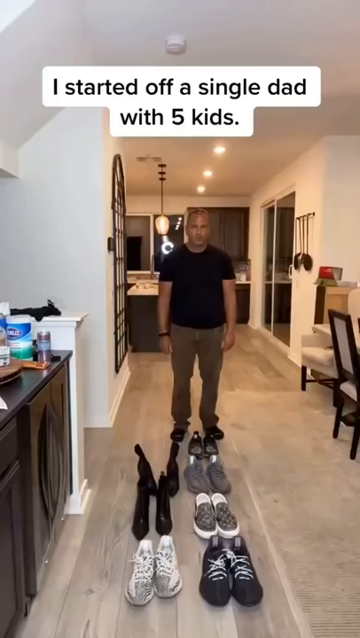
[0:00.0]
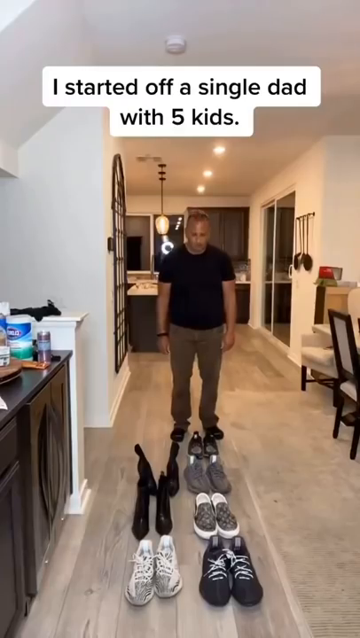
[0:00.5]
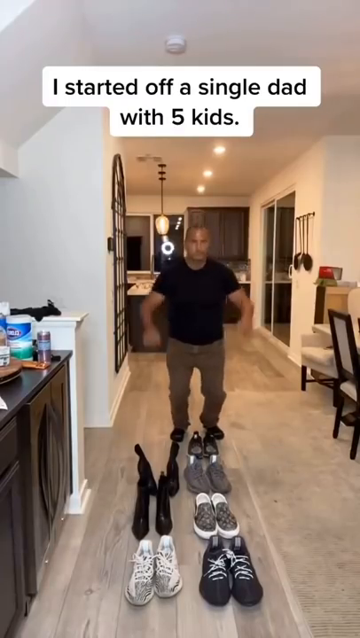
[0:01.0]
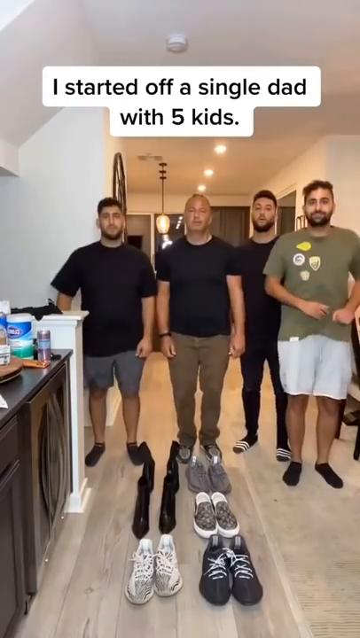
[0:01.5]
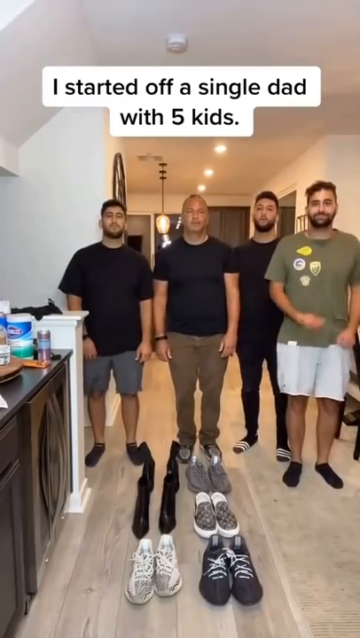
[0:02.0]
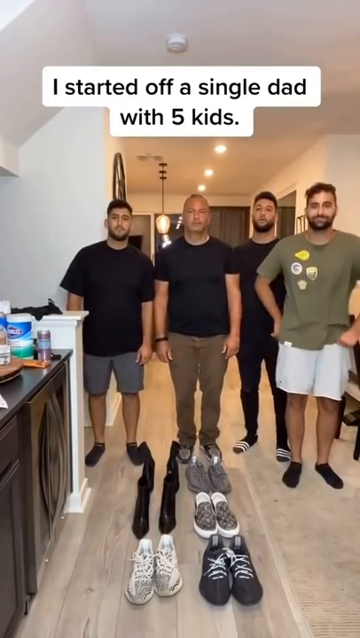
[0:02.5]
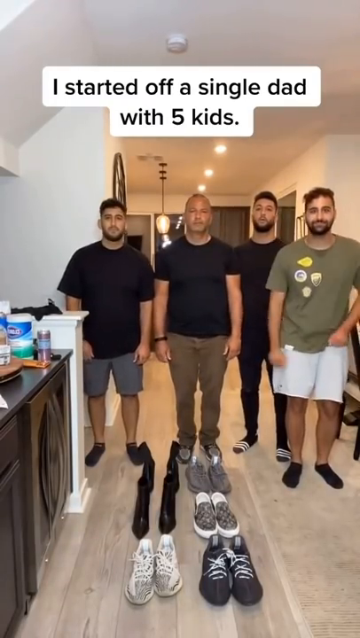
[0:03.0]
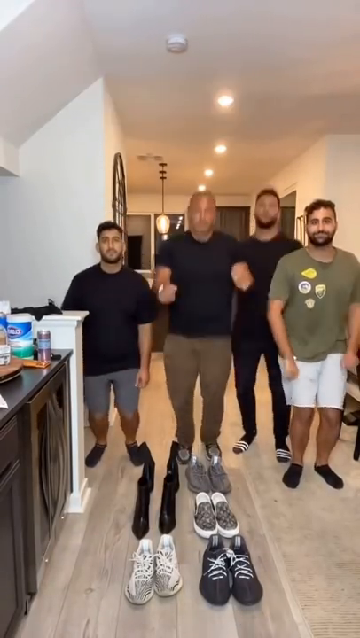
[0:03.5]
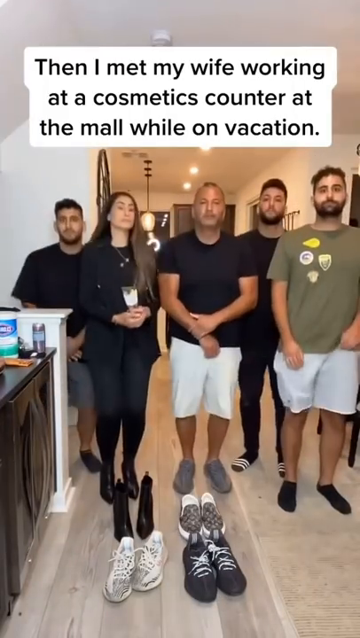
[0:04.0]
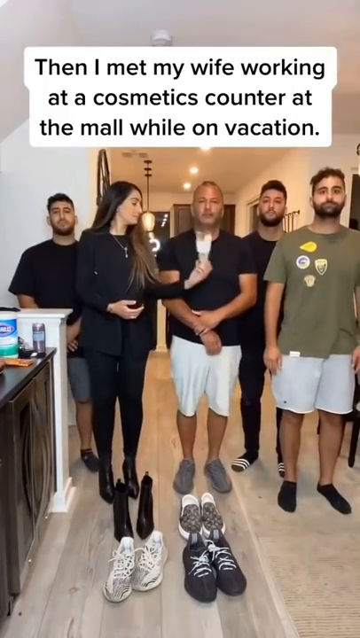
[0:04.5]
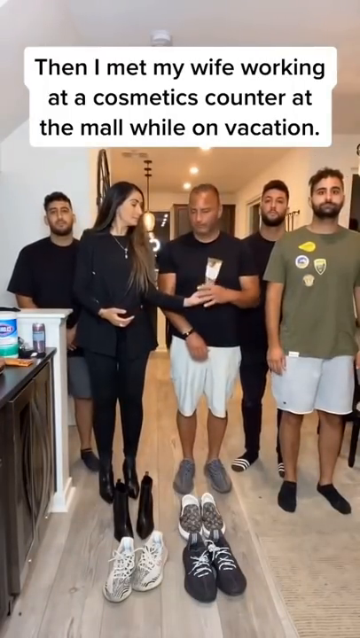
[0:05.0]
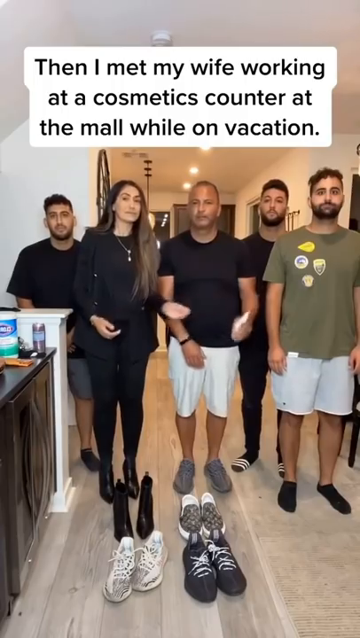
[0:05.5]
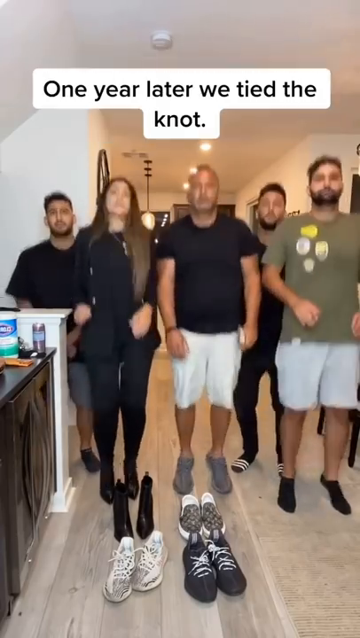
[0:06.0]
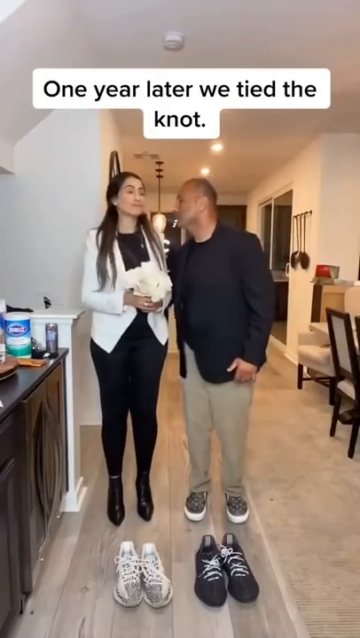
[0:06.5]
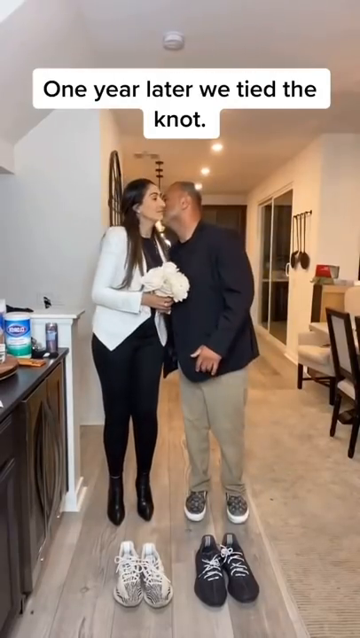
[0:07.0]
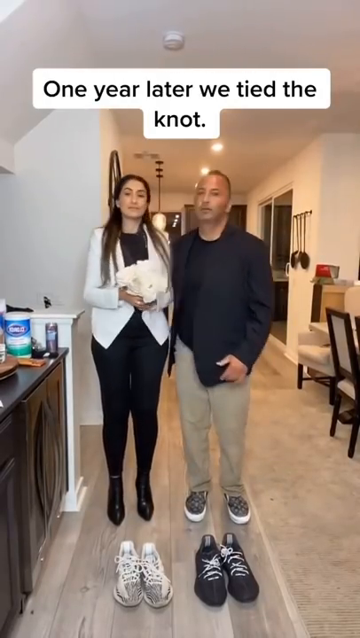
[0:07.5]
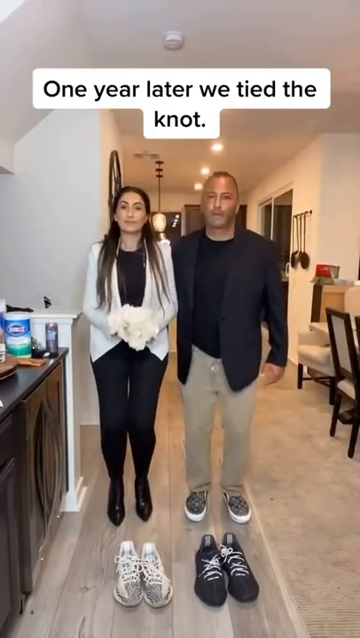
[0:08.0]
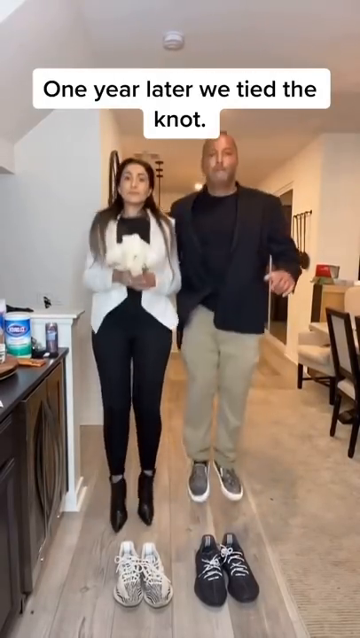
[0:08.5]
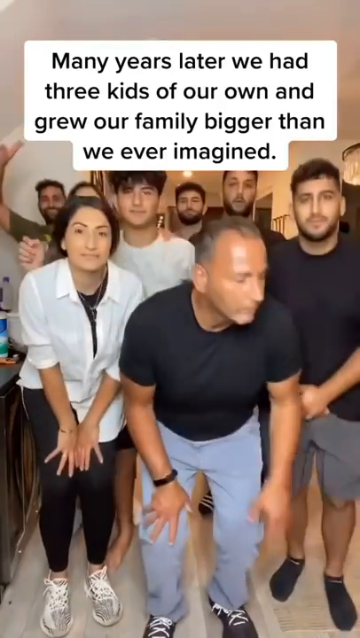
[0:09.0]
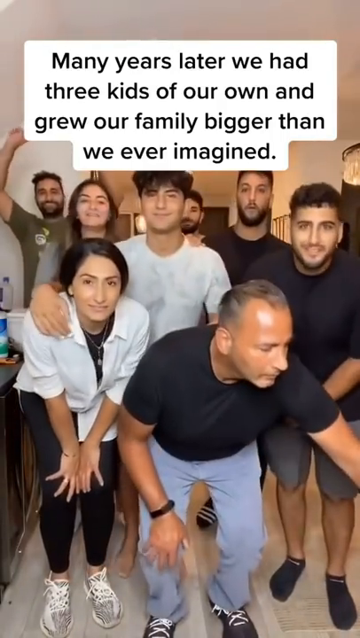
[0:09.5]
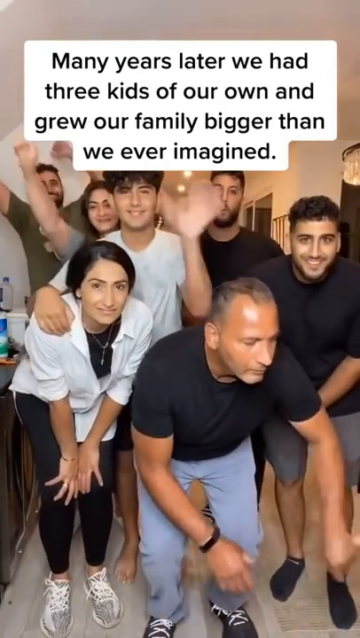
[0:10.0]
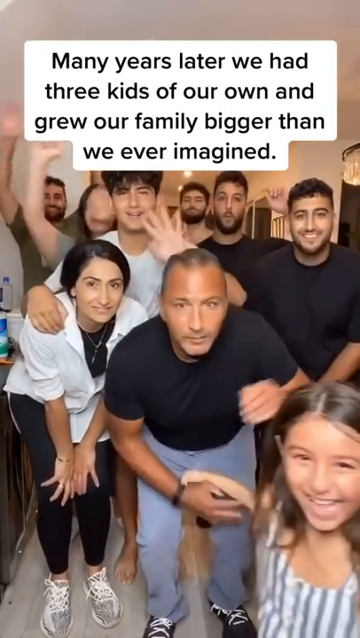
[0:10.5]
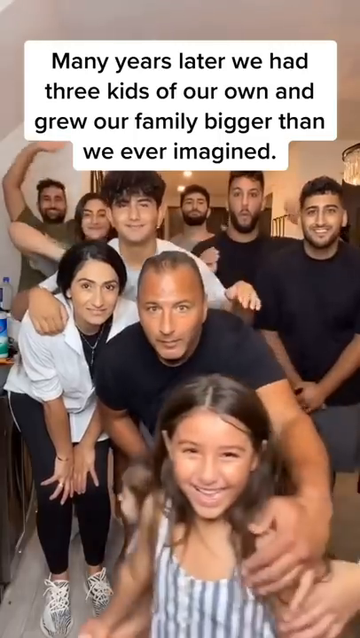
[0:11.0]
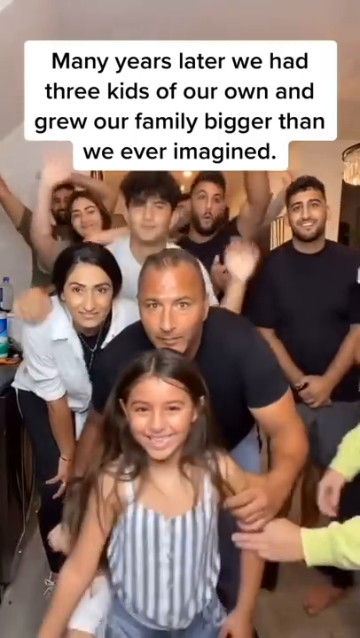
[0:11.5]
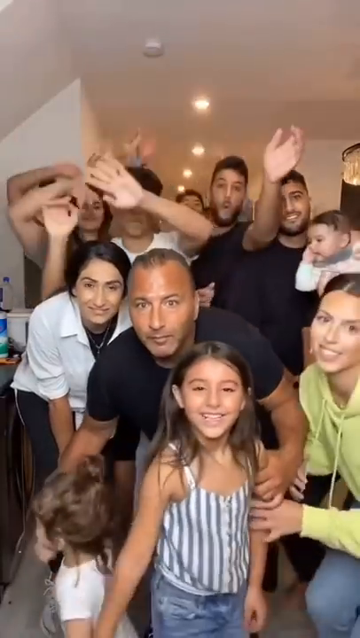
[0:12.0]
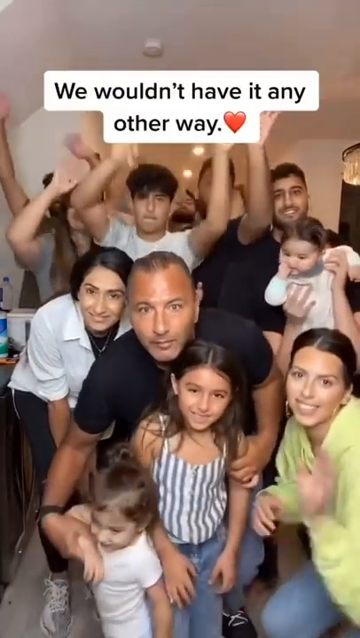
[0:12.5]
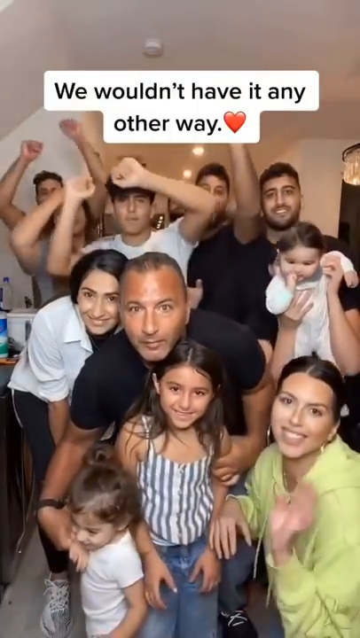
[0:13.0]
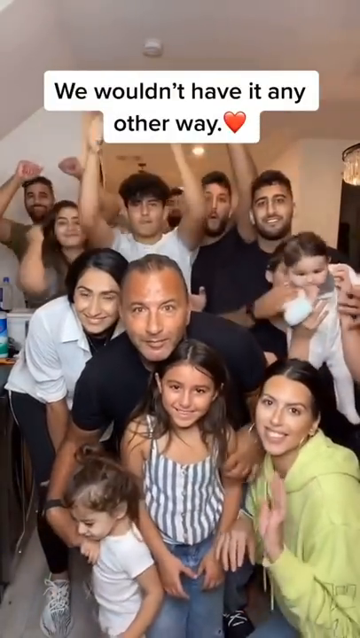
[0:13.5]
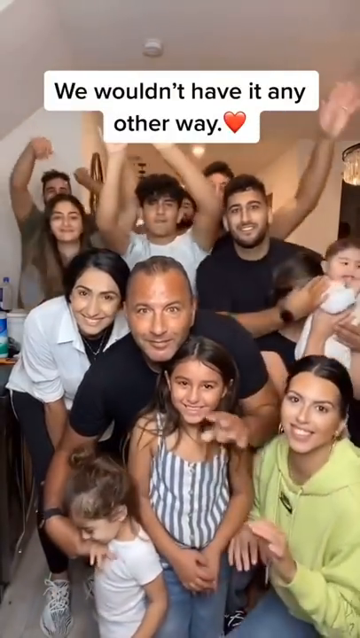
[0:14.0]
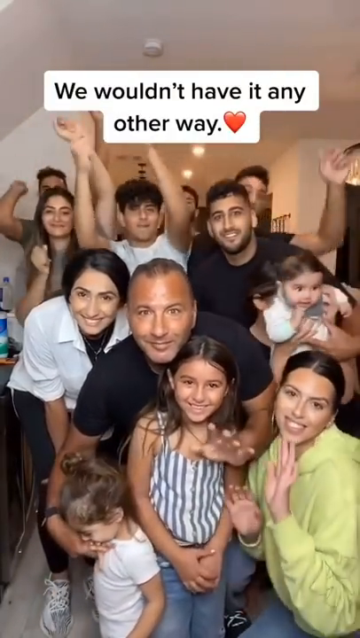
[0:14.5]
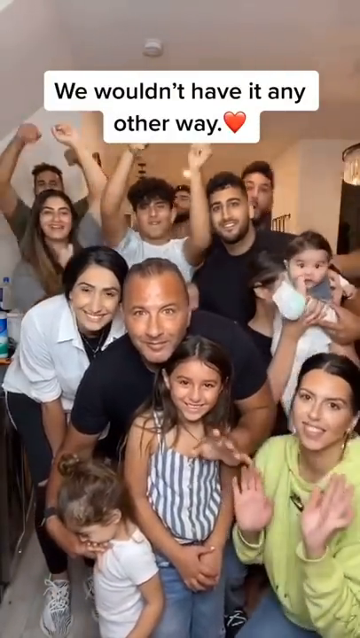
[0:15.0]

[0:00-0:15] A man in a black t-shirt and brown pants is at the start of the video, with six pairs of shoes in front of him. Text at the top of the video reads "I started off a single dad with five kids". He jumps up in the air, and when he lands, three boys appear next to him. They all jump at once, and as they land, another girl pops up next to them. They jump up and land, and the kids disappear while a woman in a white jacket appears next to him. They jump one more time, and as they land, six children pop up next to them and four other people appear on camera as well. Text at the top of the video reads "we wouldn't have it any other way" with a heart emoji.